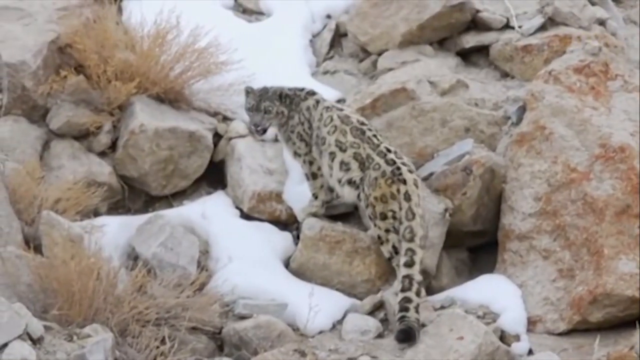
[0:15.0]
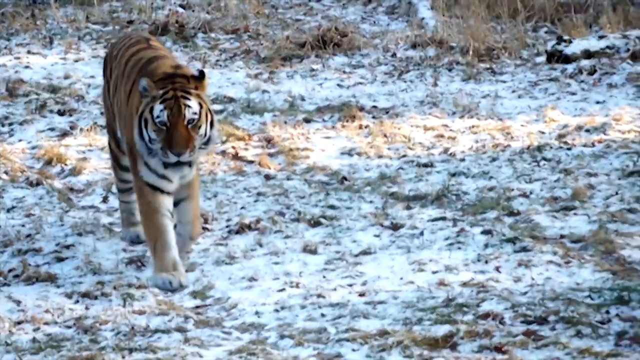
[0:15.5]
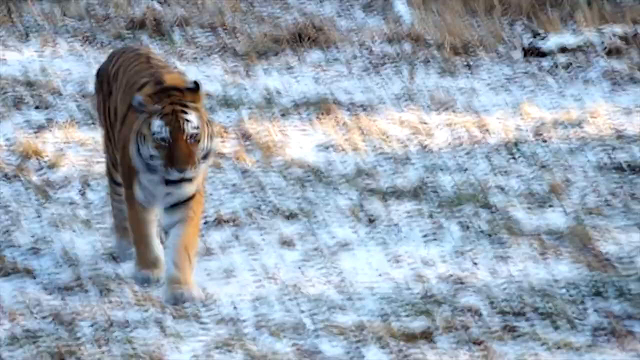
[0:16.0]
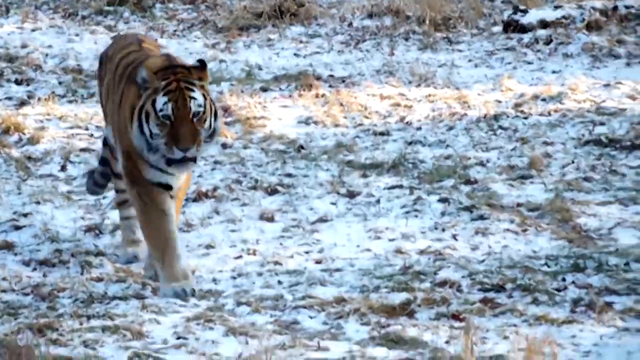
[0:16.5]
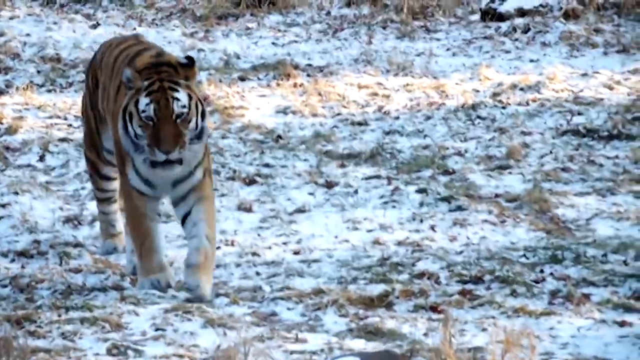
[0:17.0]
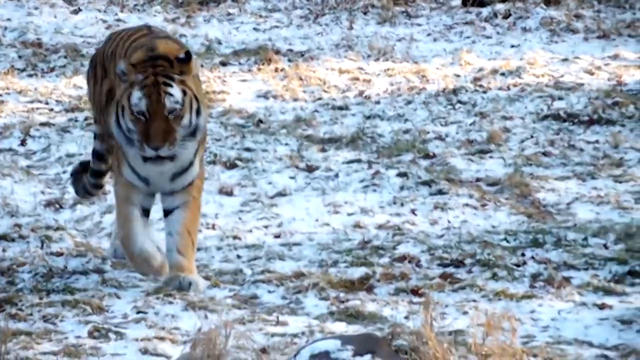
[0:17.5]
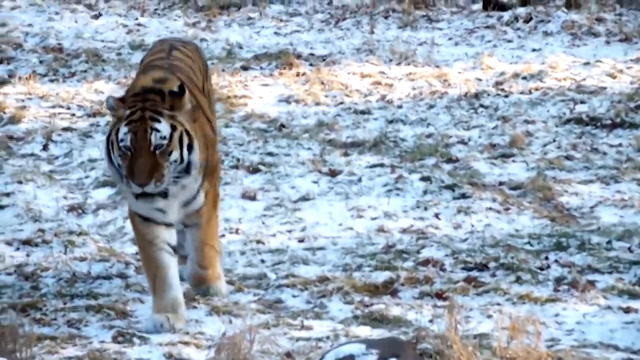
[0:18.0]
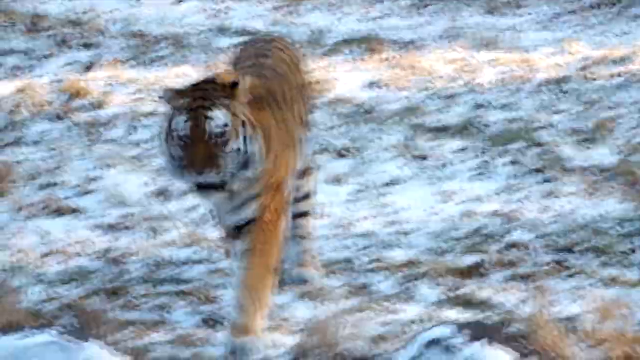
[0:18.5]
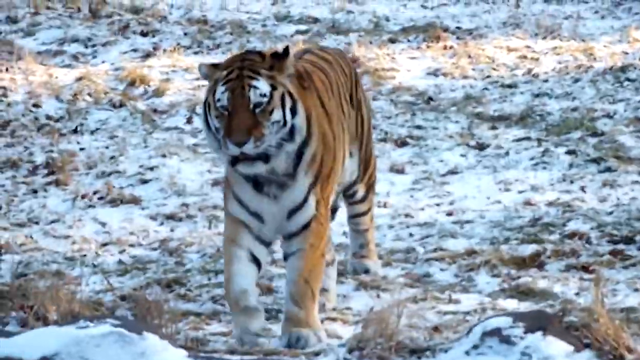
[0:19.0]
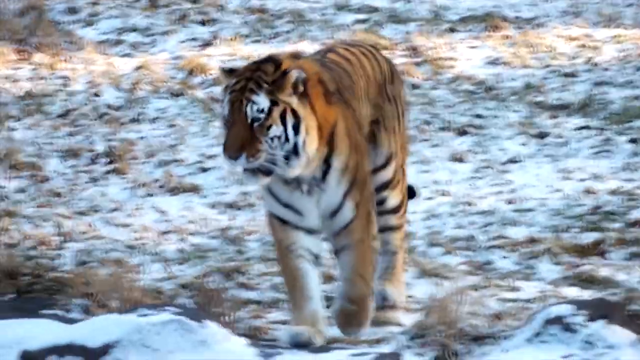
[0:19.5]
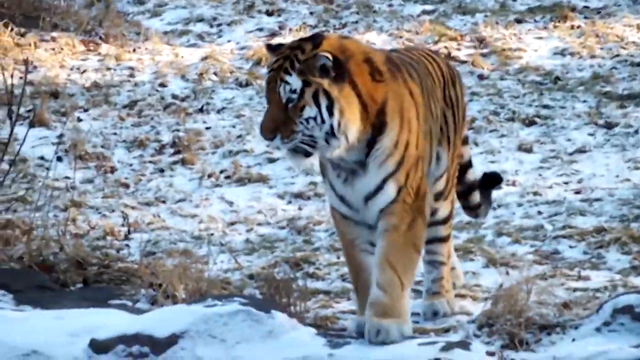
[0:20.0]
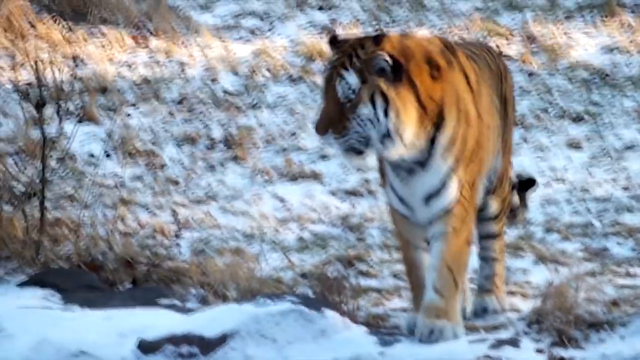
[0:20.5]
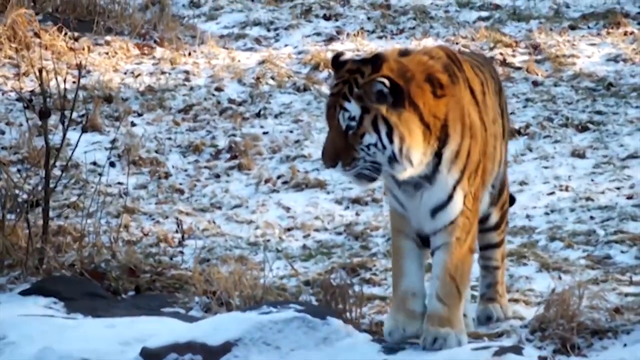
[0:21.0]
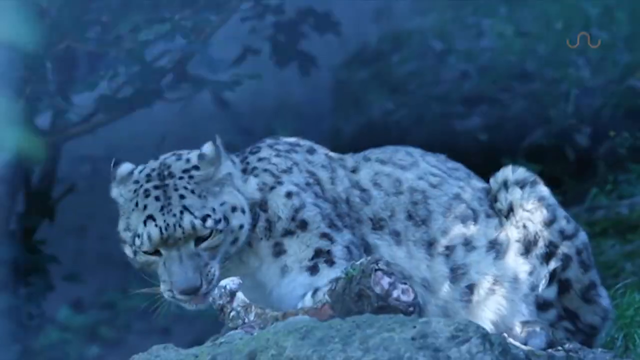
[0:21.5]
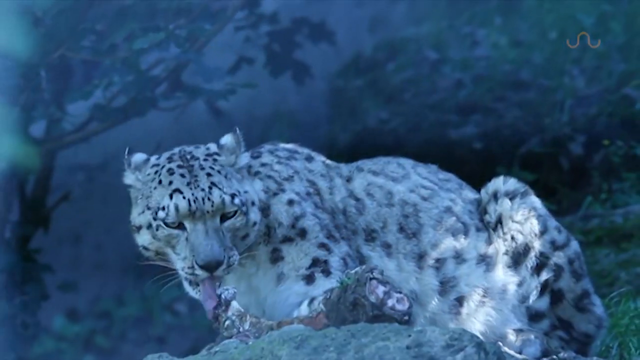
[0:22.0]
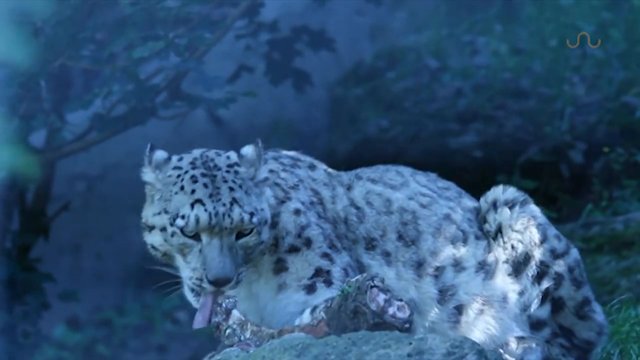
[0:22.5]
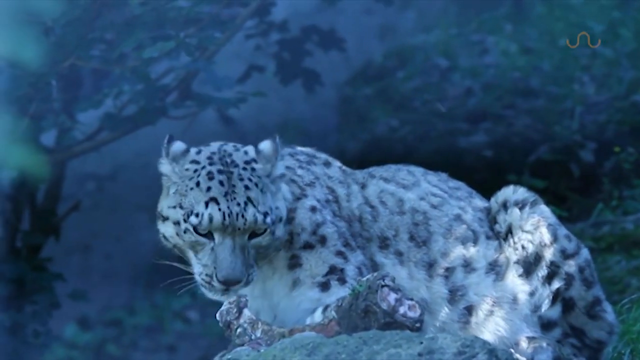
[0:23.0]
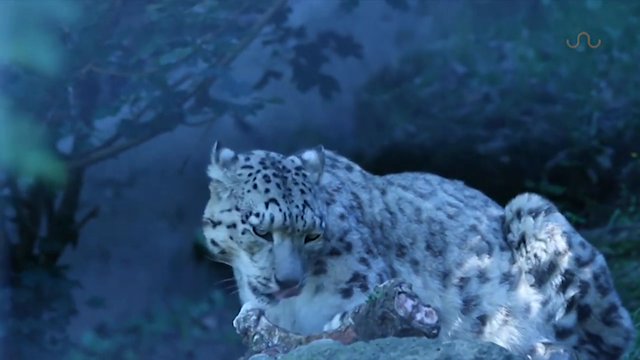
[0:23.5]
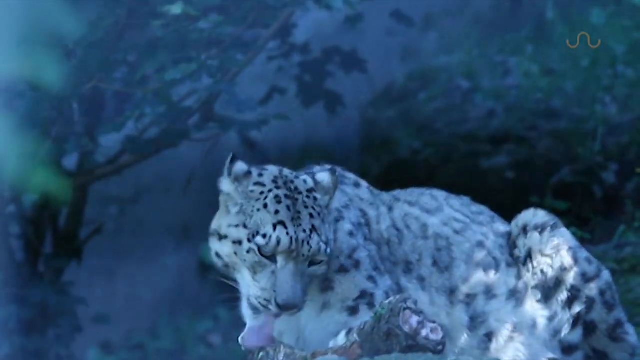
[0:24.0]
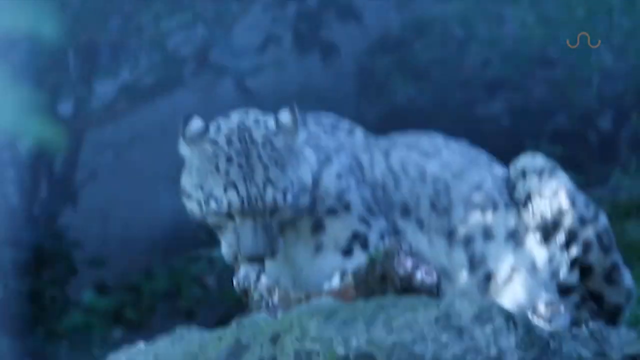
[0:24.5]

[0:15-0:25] Snow covers the ground, and a gold and white tiger appears. A snow leopard sits on some rocks, eating something it has apparently killed.